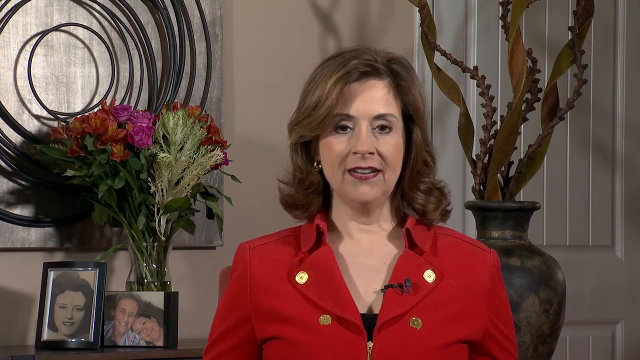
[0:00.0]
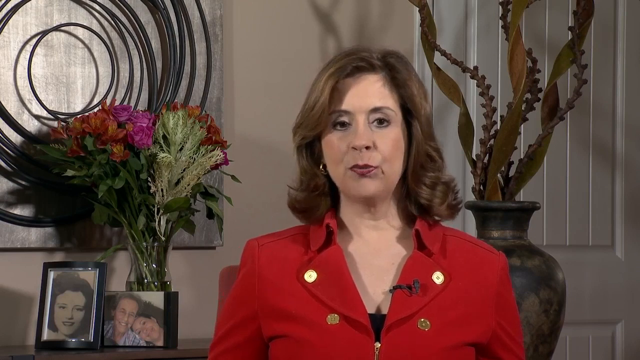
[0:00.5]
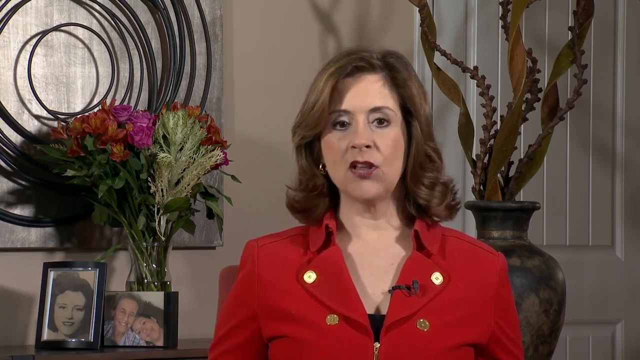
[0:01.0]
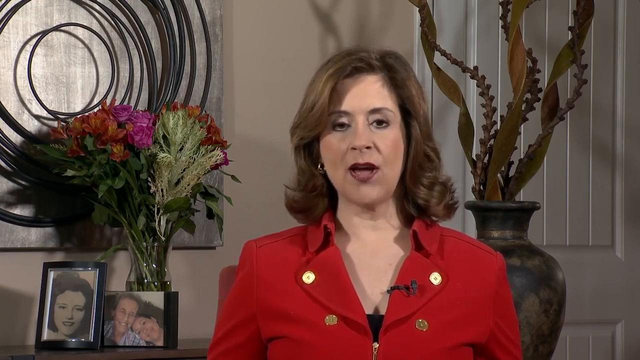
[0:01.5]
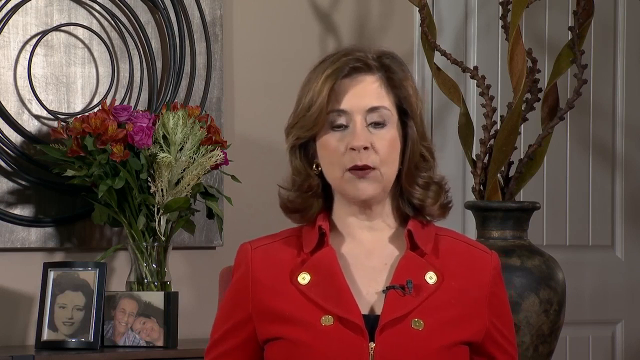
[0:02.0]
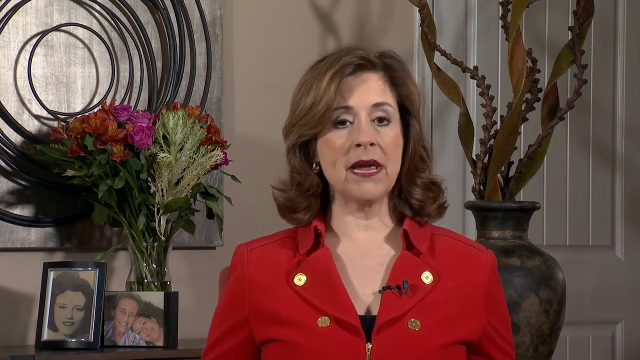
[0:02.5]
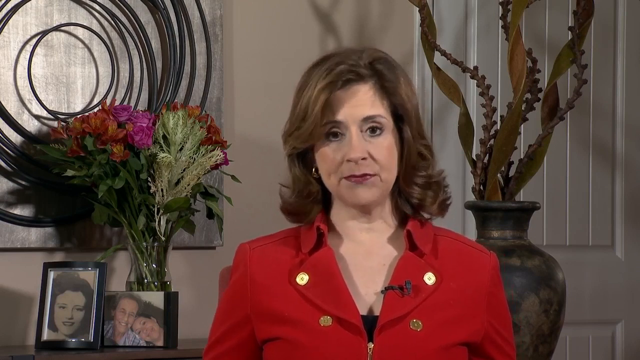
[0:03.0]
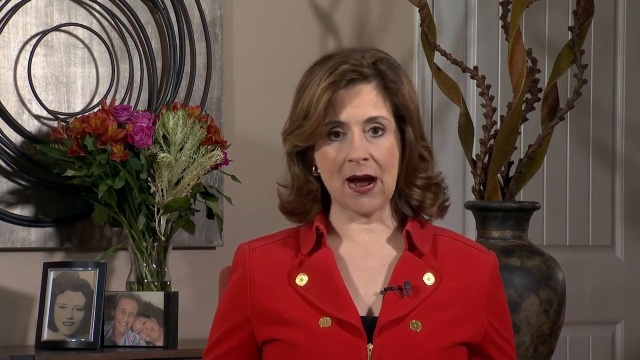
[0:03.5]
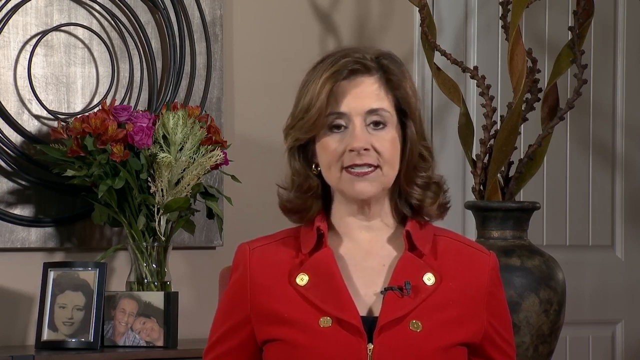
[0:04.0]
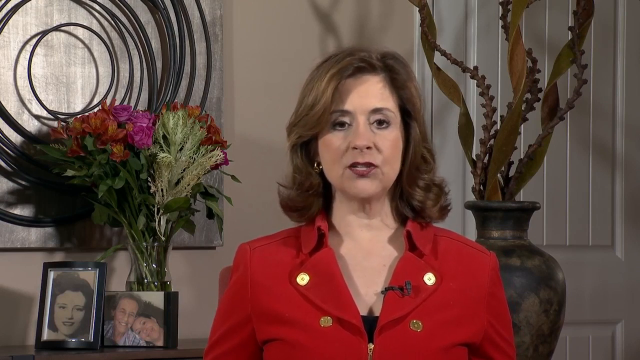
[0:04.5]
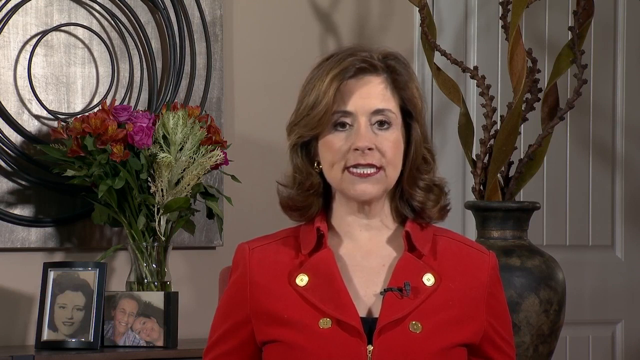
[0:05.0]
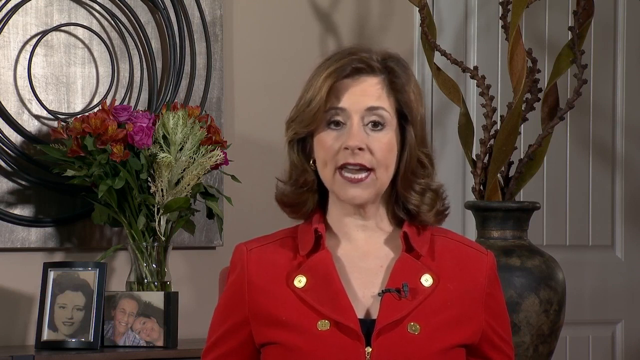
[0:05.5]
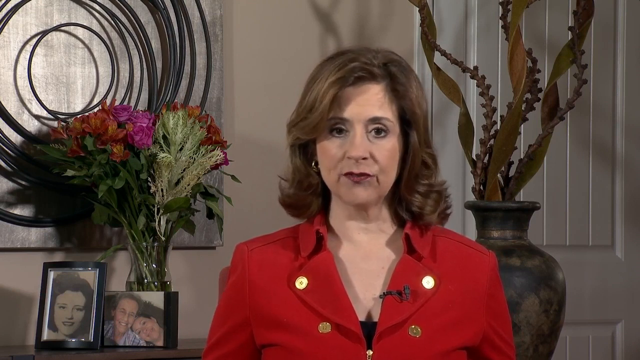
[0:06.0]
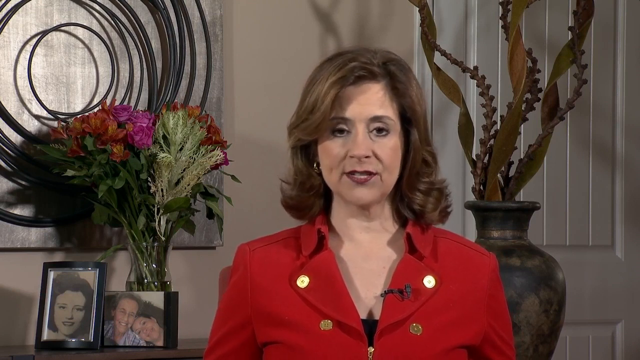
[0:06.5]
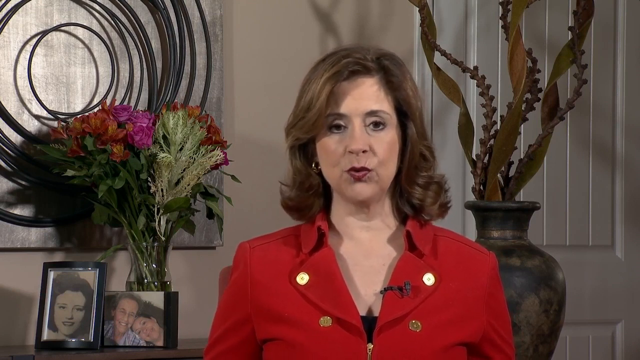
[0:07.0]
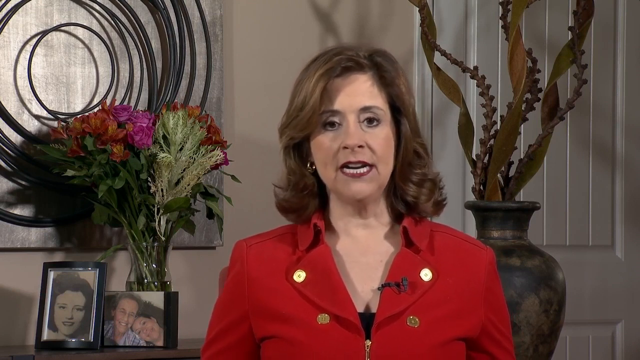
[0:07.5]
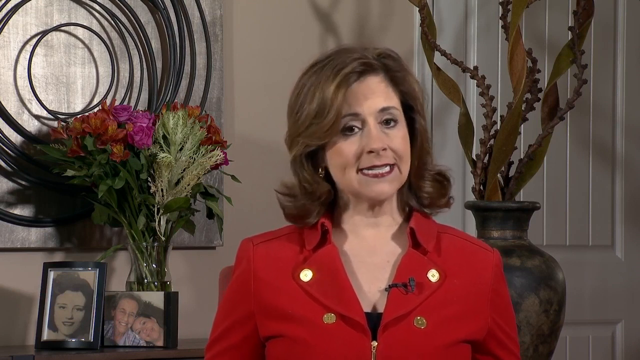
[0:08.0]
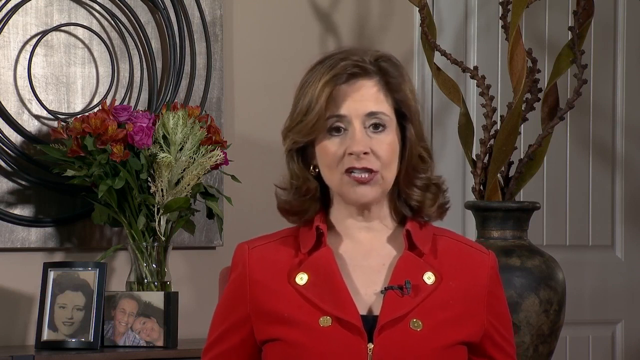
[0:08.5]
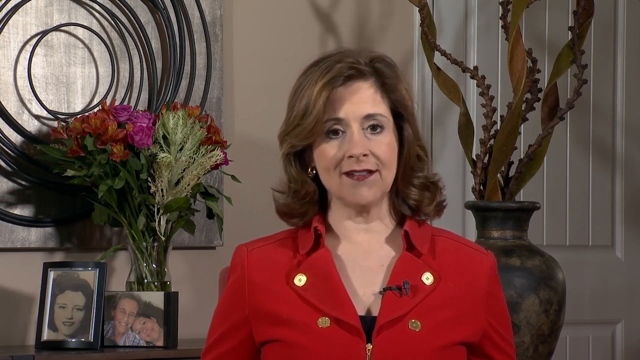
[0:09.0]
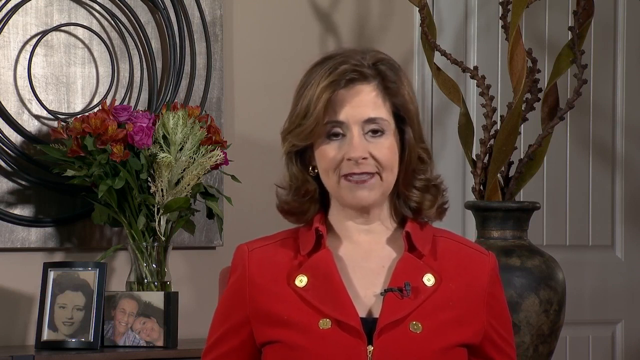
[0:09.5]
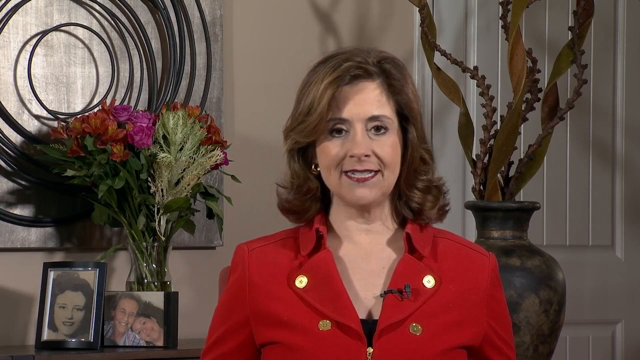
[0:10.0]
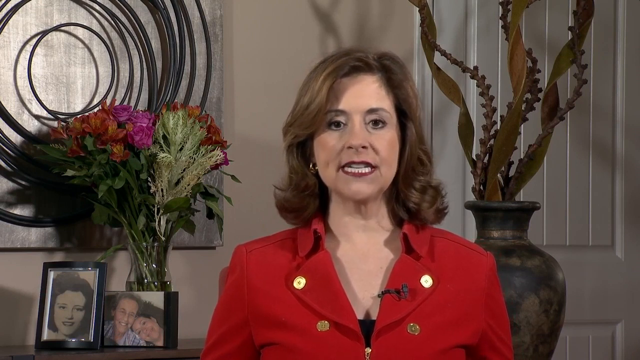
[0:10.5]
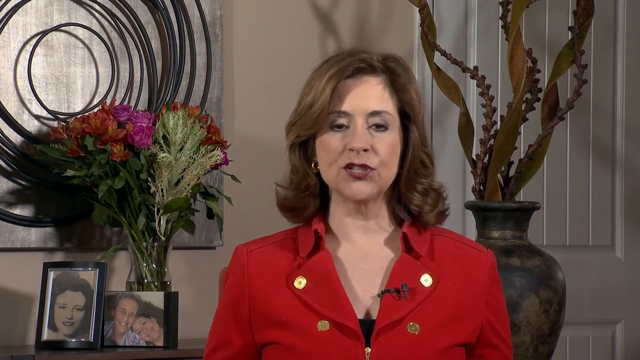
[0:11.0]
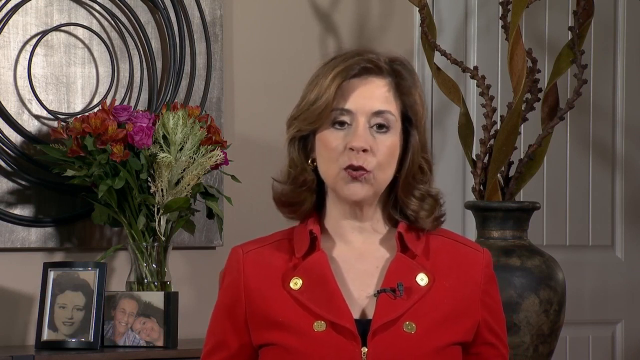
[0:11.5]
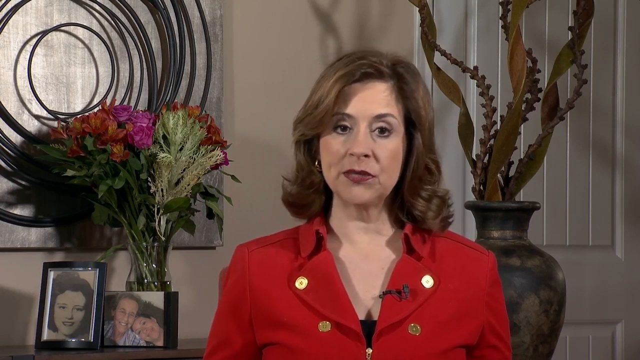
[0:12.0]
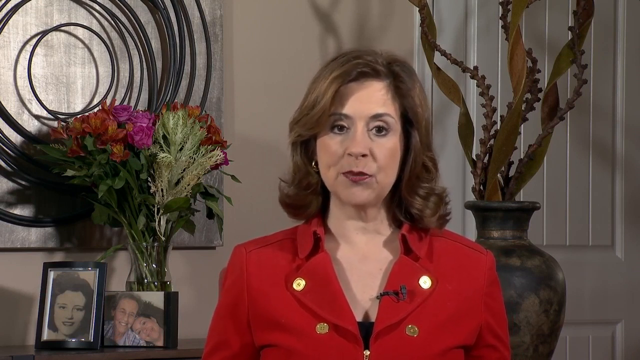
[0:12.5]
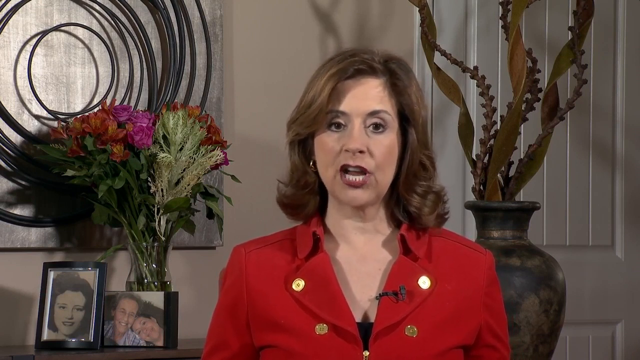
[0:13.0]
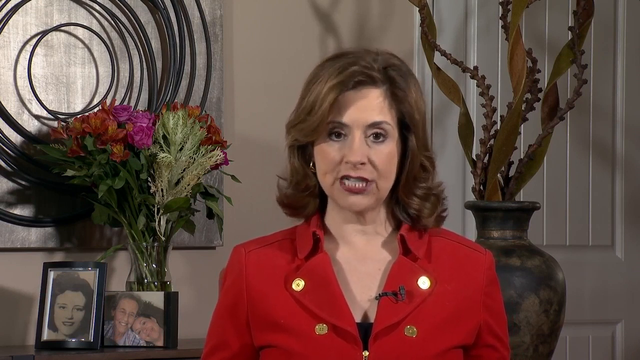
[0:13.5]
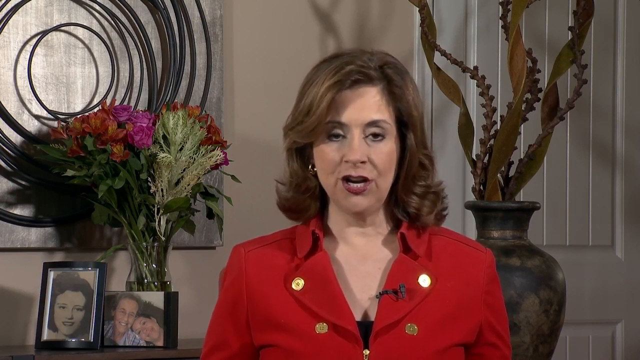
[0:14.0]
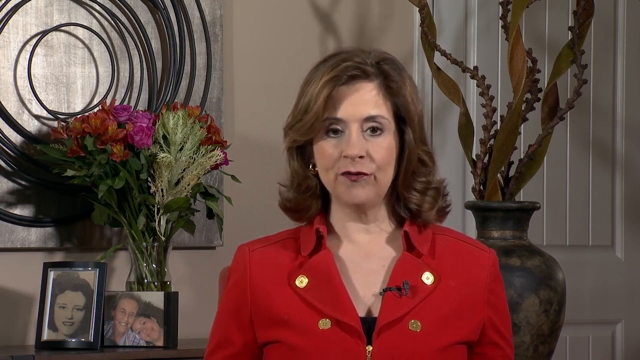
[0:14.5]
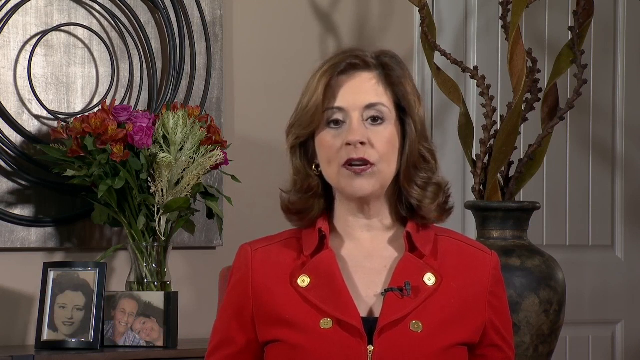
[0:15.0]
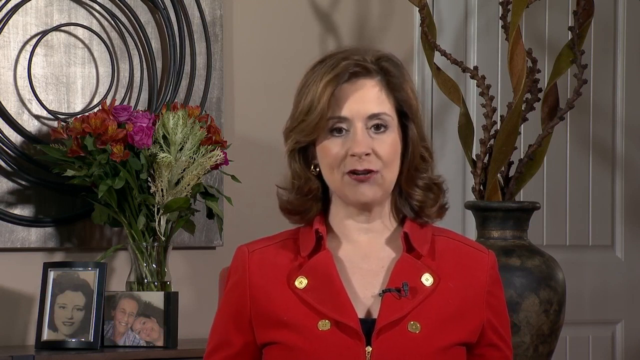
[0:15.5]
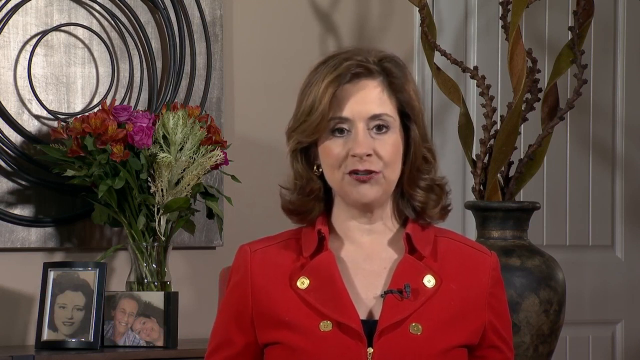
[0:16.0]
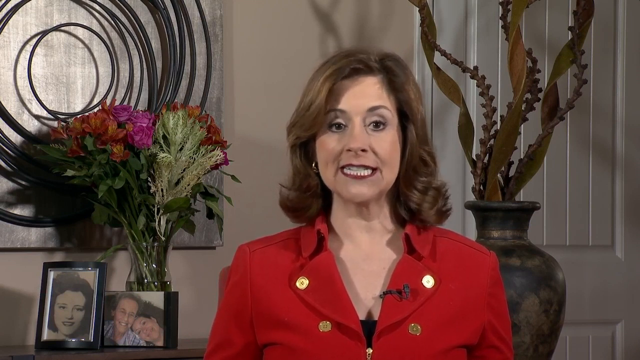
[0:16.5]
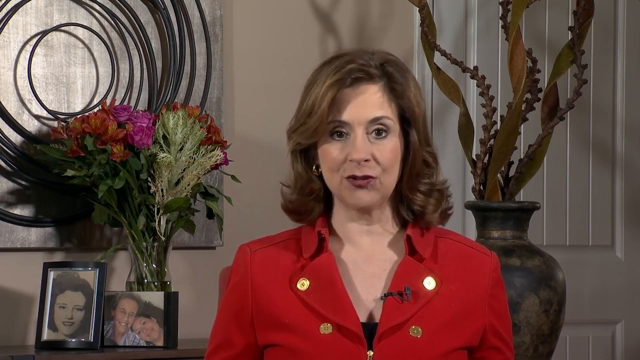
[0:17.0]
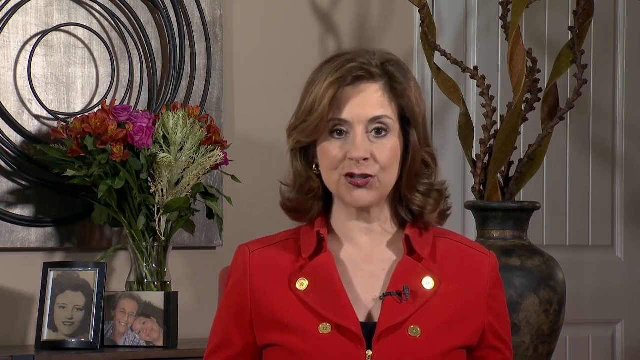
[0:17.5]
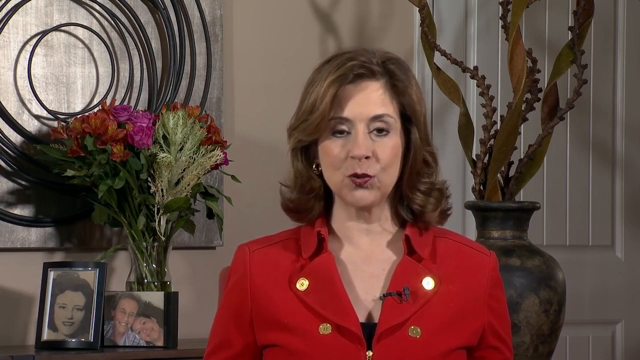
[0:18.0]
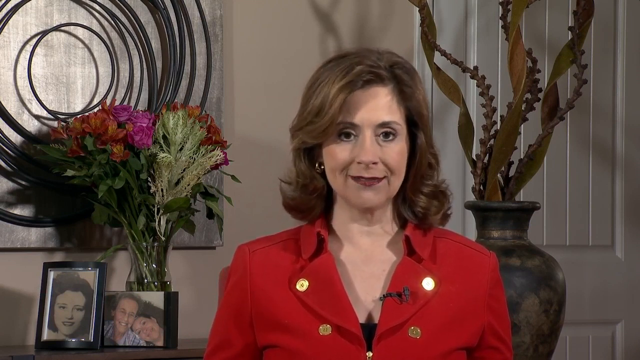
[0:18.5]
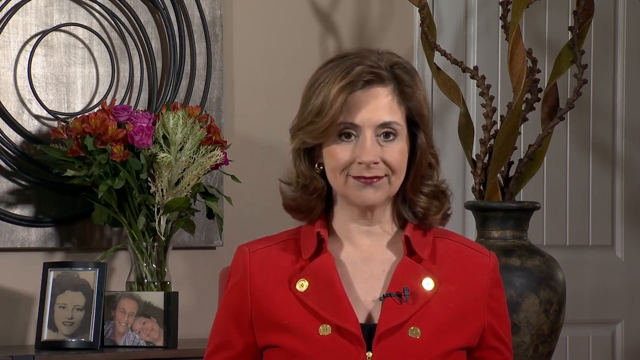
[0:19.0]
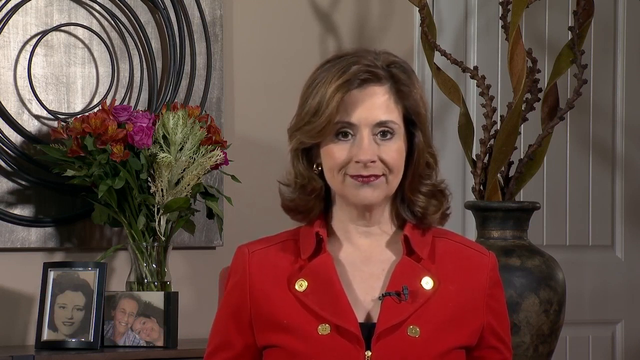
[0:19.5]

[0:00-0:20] A reporter wearing a red shirt appears, and behind her is a vase with some plants coming out of it. On the left are some flowers, and two pictures of people are visible. The video then focuses only on her, and then a TV screen shows "coronavirus coverage, special education lessons during quarantine in Jessamine County." A woman is on the laptop; she wears some kind of bracelet and a red t-shirt. At the top right is a board that says "24 x 5", with 5, 20 and 4 written on it; the 20 and 4 are close to each other, and the 5 is in the opposite way. 5 and 20 equals 100, which is shown in a special square. At the bottom of the right side is a smaller rectangle.